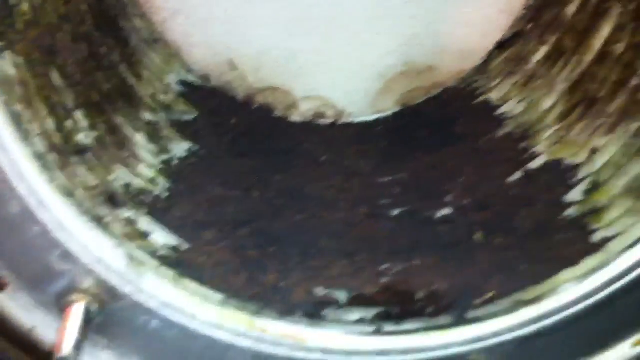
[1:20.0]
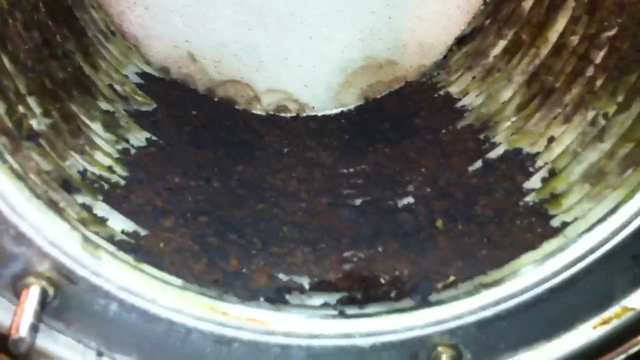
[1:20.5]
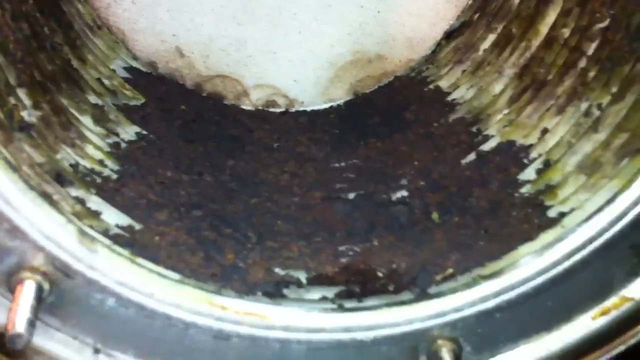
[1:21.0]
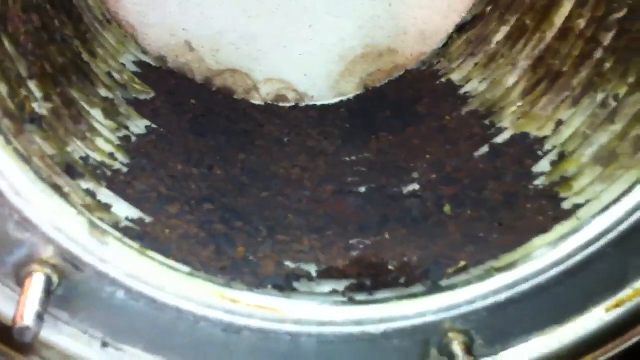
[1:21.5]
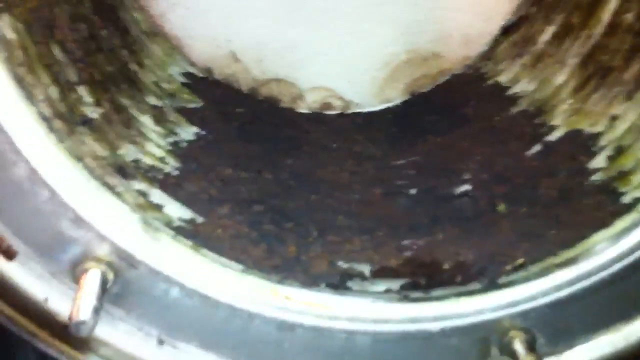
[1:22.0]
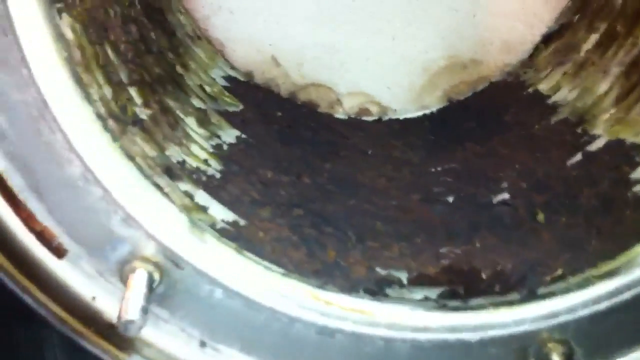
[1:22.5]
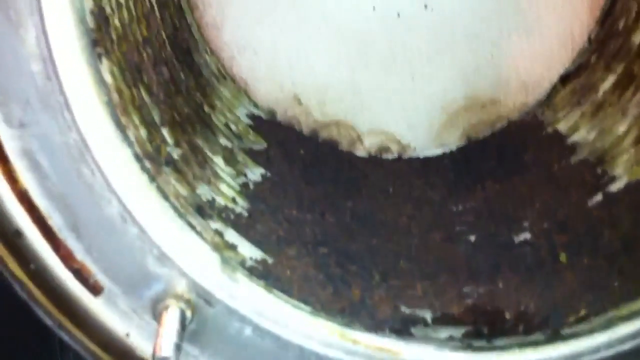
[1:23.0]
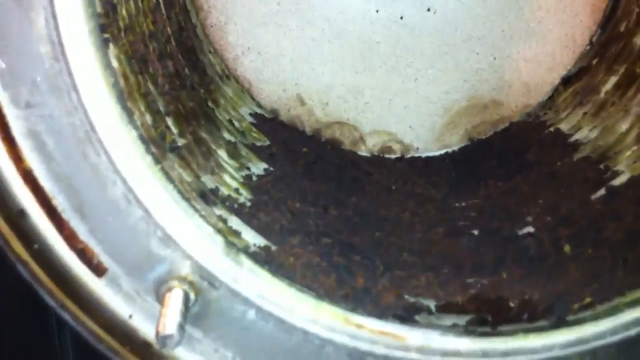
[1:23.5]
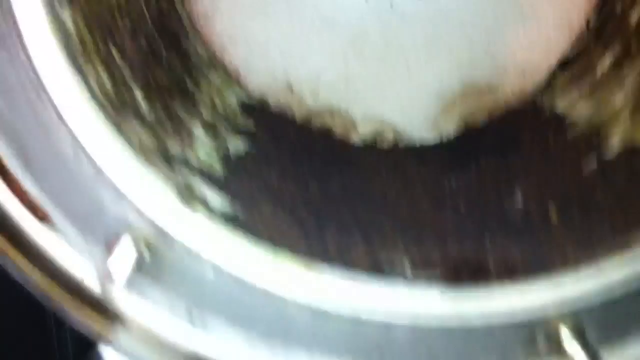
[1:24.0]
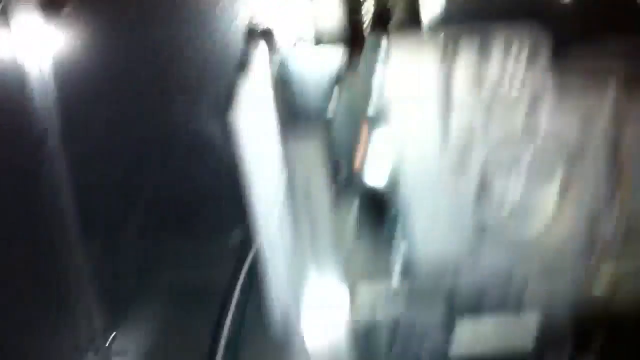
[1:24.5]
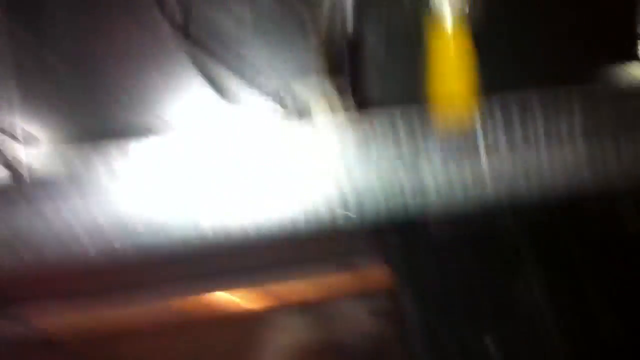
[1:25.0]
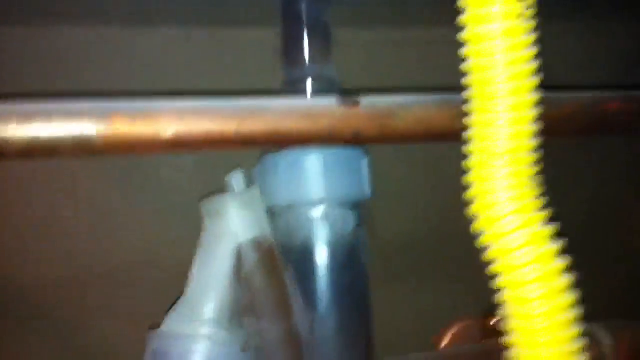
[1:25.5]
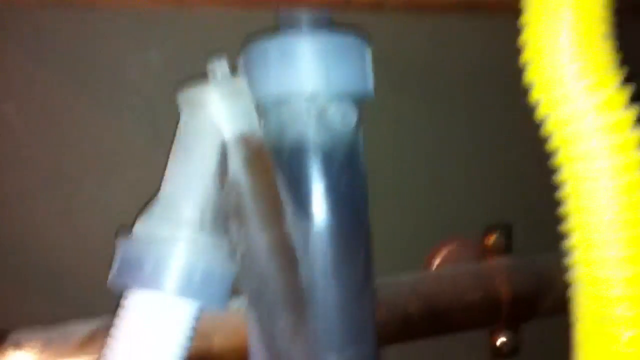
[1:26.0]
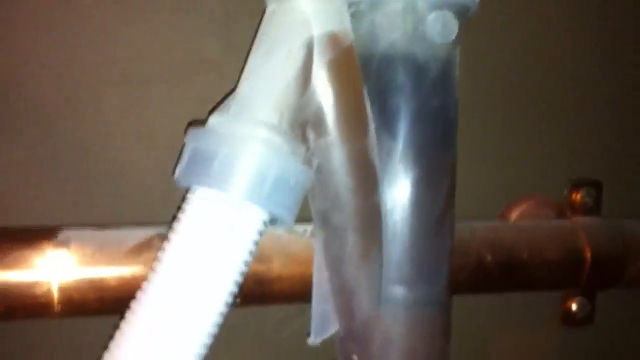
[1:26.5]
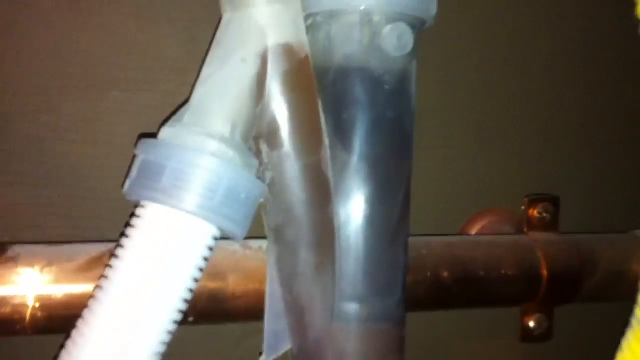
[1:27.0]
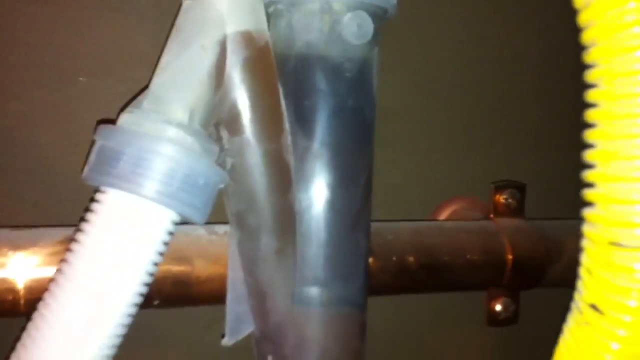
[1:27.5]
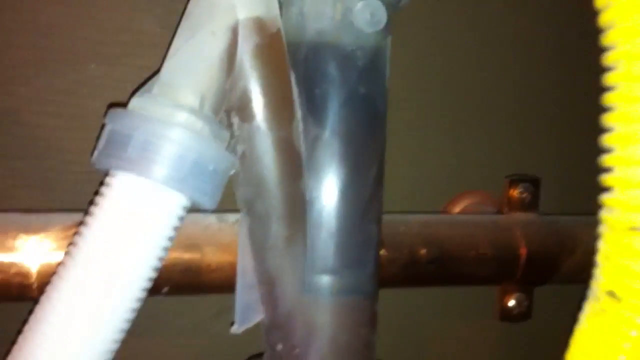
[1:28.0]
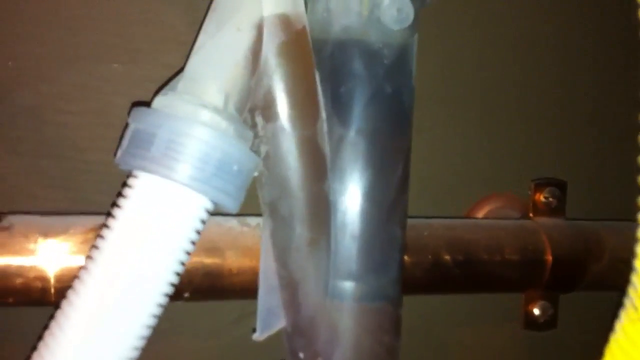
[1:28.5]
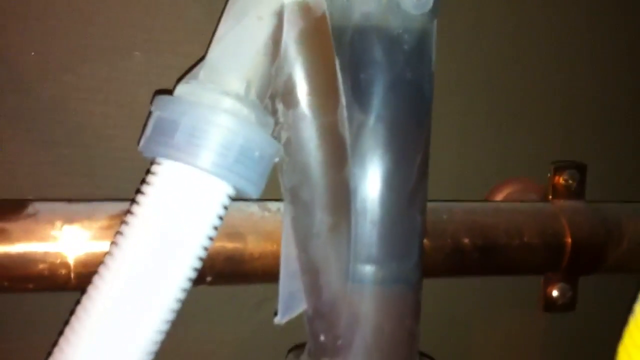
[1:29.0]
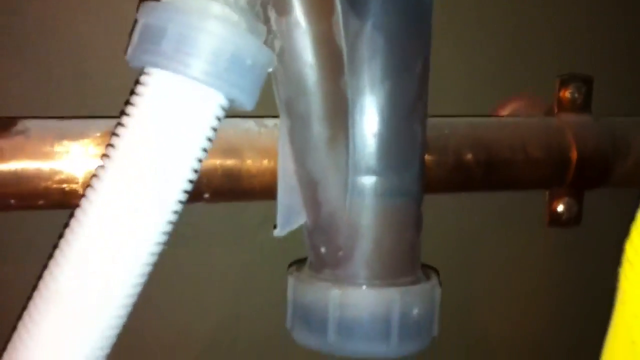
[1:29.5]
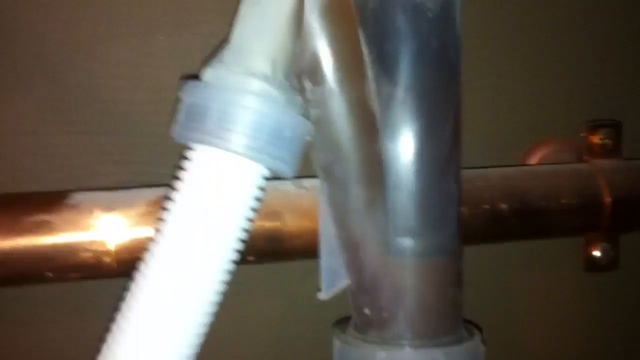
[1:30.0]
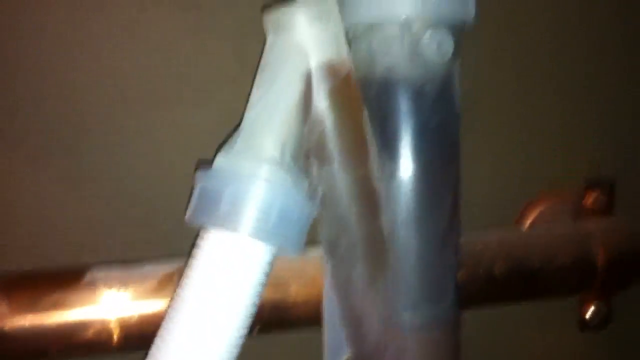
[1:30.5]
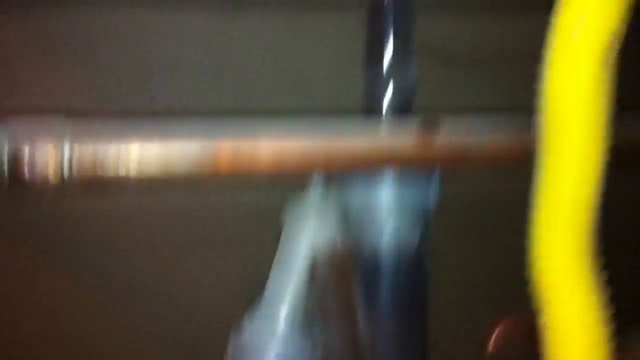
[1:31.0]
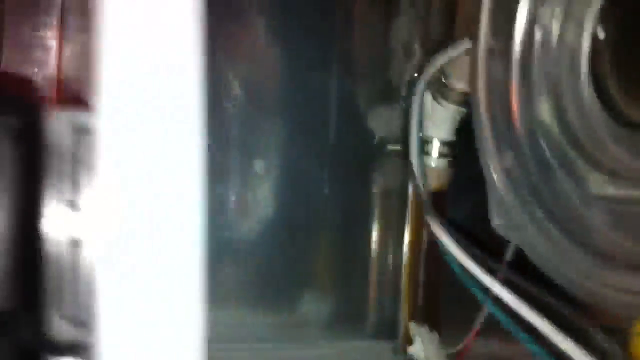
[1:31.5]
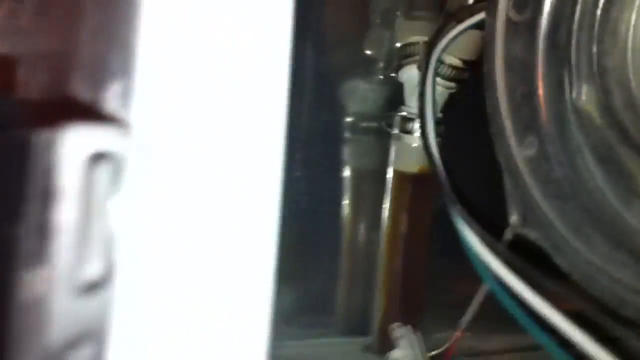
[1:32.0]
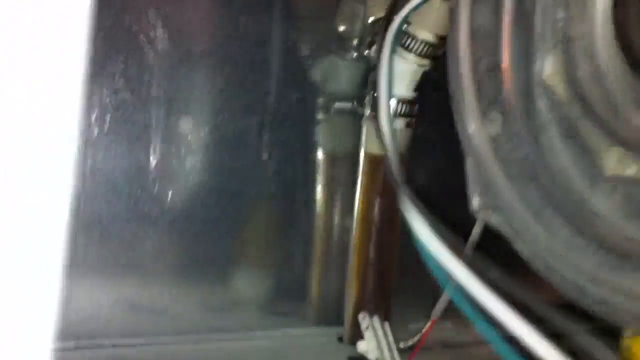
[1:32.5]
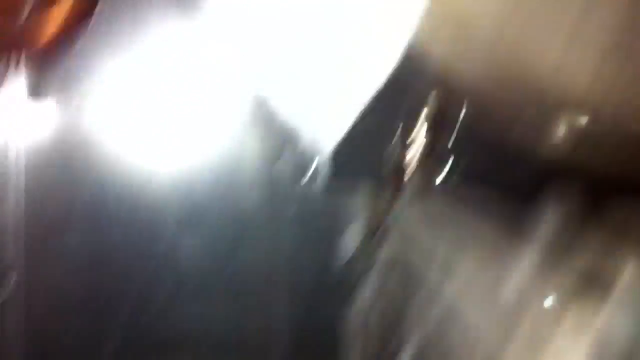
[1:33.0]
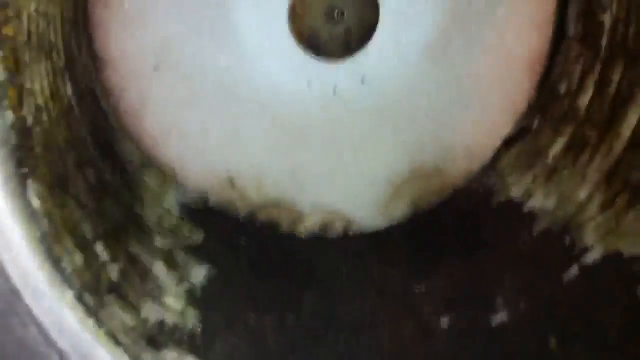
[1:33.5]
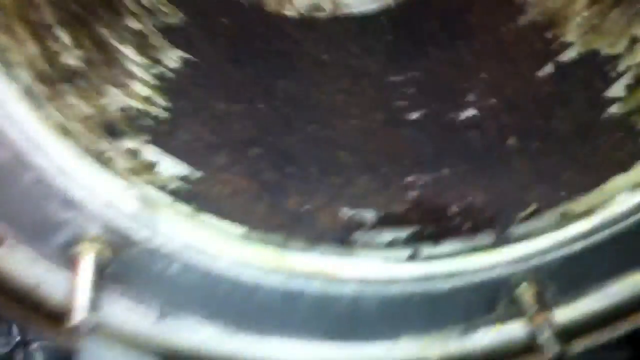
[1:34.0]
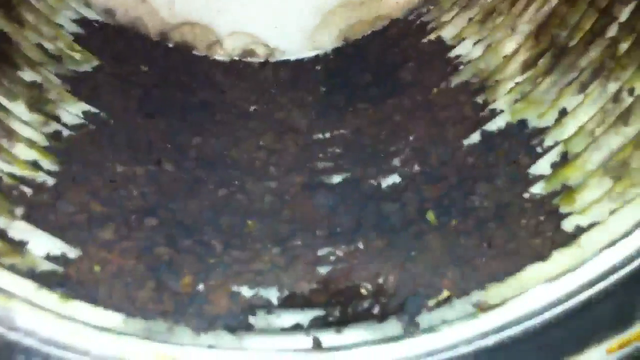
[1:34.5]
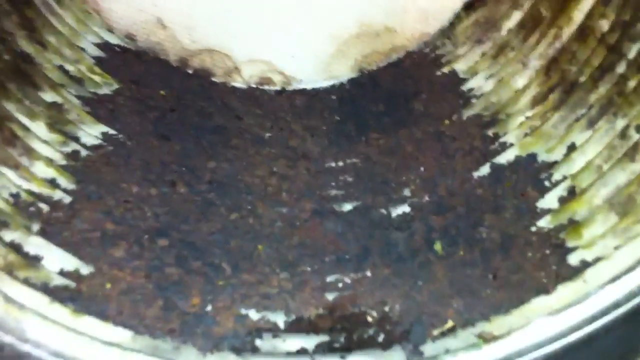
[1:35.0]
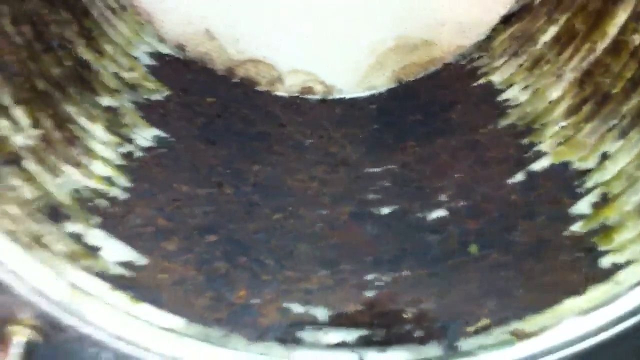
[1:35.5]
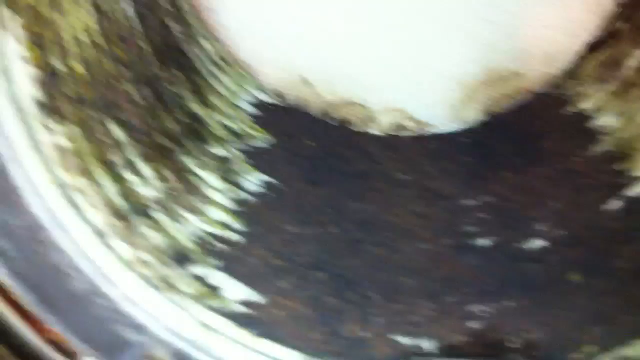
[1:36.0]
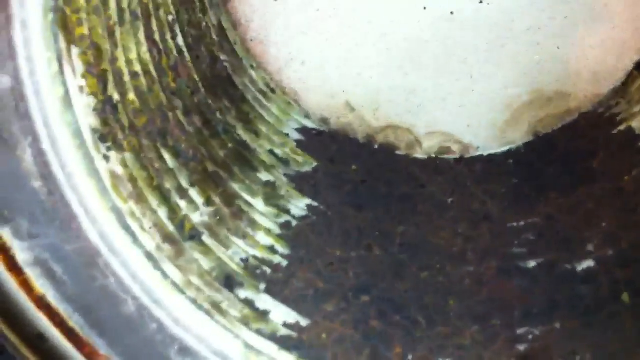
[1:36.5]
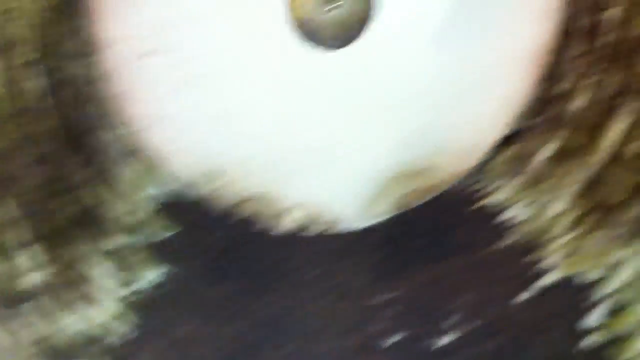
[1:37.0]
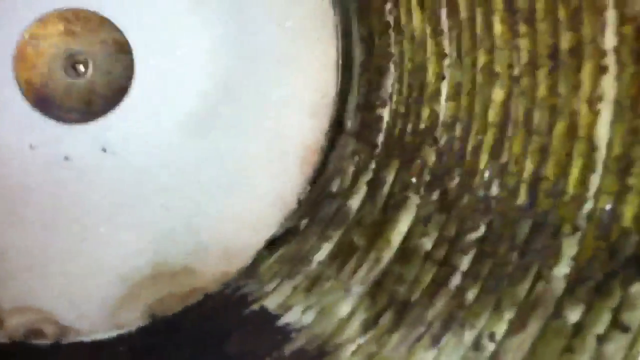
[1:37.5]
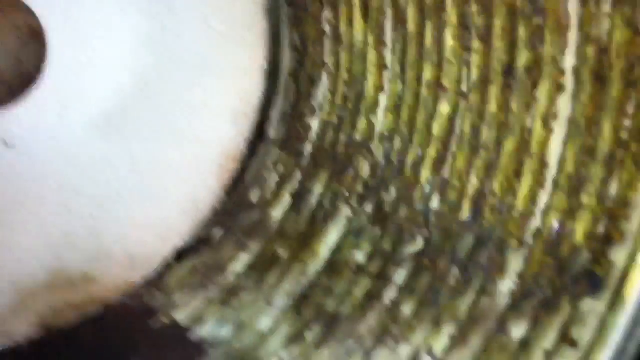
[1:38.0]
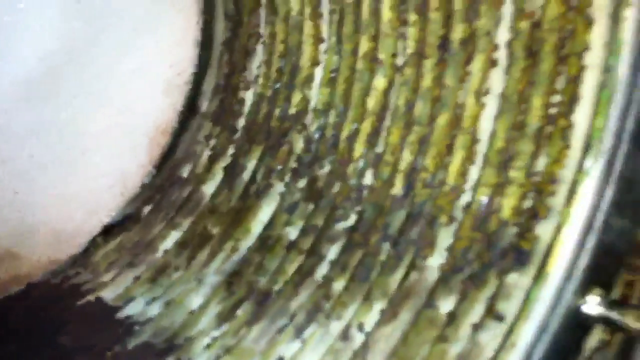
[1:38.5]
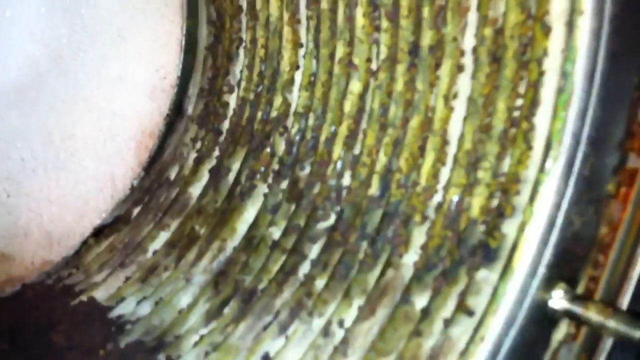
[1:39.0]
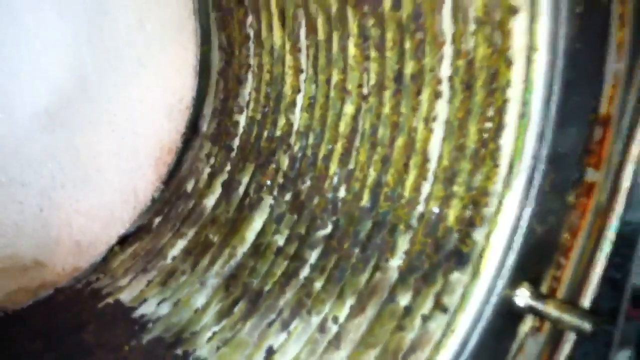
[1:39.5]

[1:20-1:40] The inside is really dirty, with a lot of rust and what looks like mold. The person shines a light in to look at it, then looks at the bottom and the tubing, which looks like it has brown stuff in it. He goes back up to look inside the little silver bin, at all the rust, dirt and algae-looking stuff.